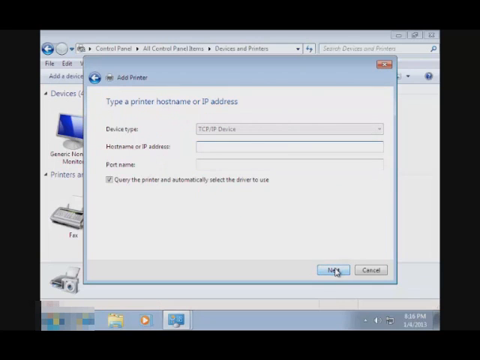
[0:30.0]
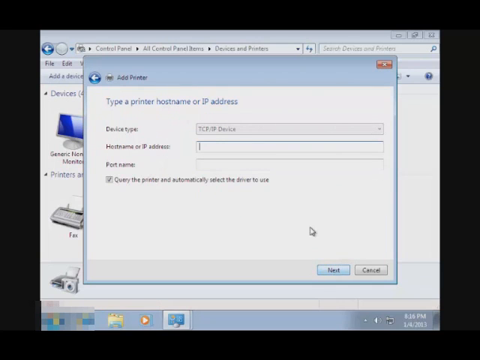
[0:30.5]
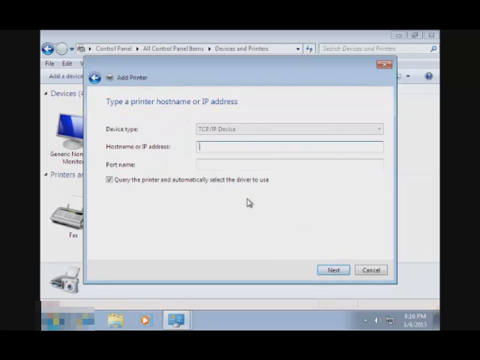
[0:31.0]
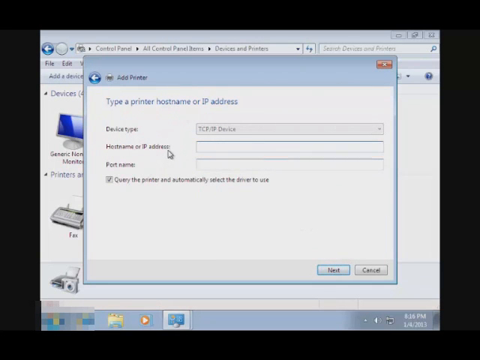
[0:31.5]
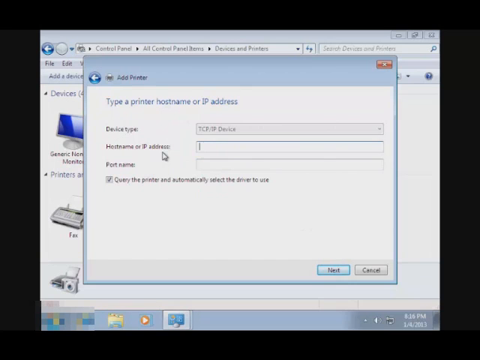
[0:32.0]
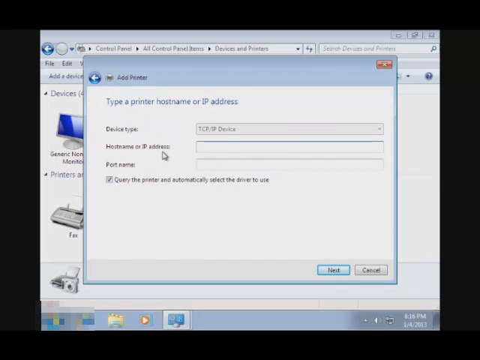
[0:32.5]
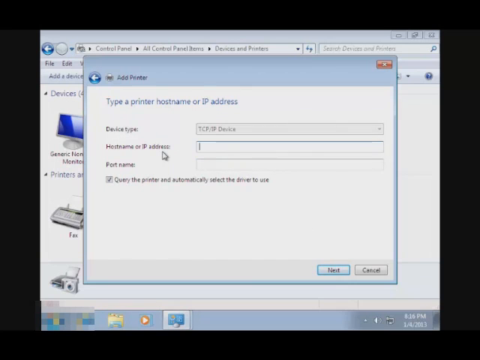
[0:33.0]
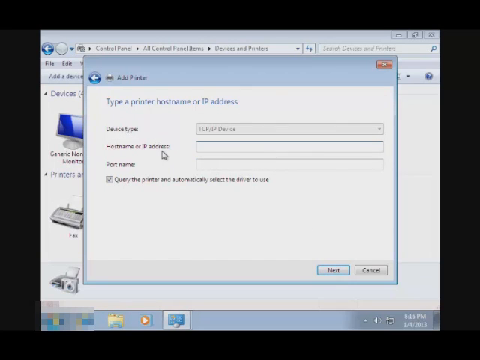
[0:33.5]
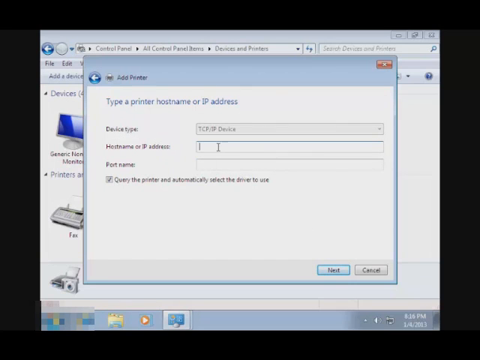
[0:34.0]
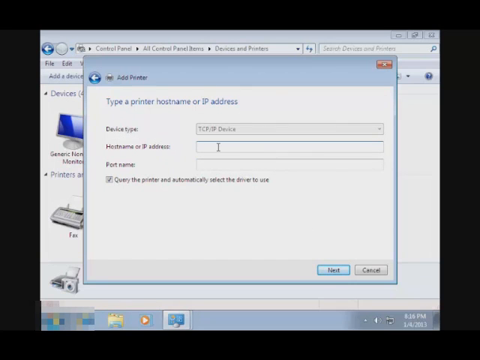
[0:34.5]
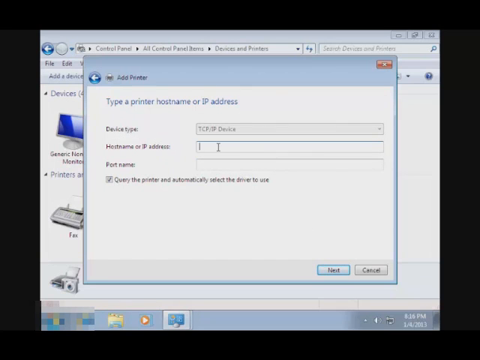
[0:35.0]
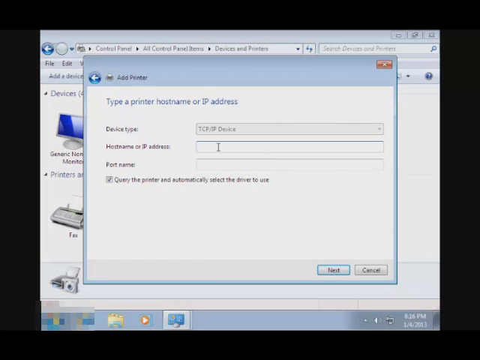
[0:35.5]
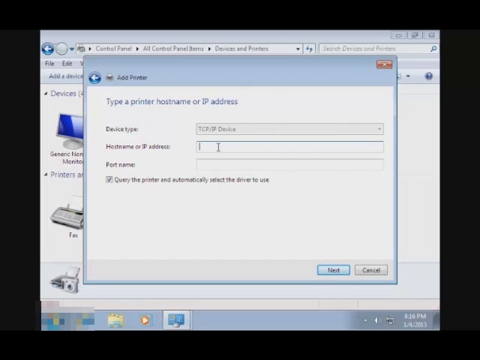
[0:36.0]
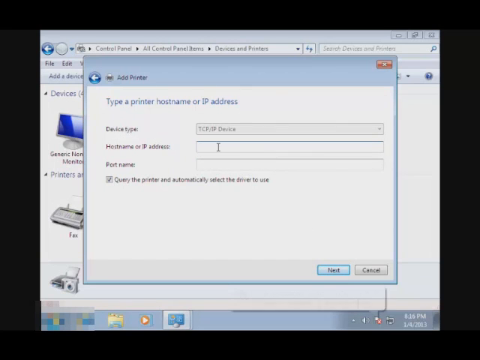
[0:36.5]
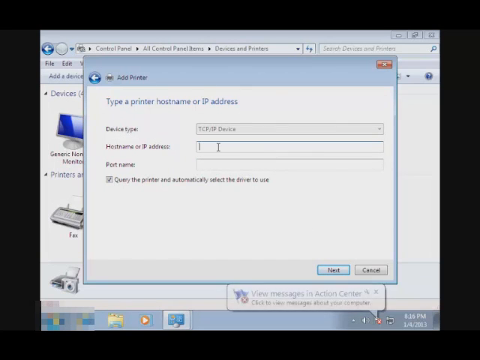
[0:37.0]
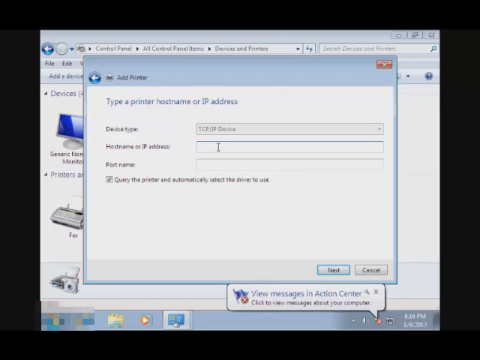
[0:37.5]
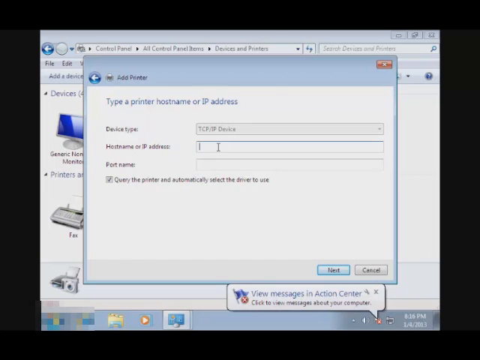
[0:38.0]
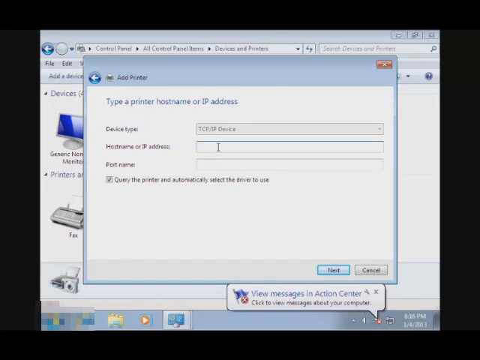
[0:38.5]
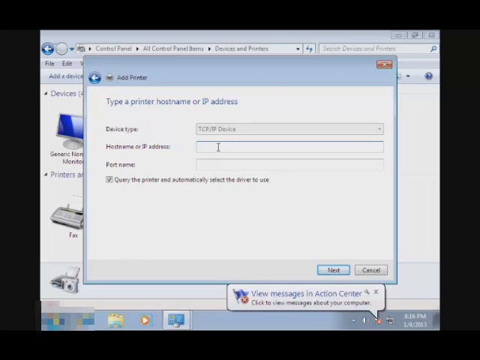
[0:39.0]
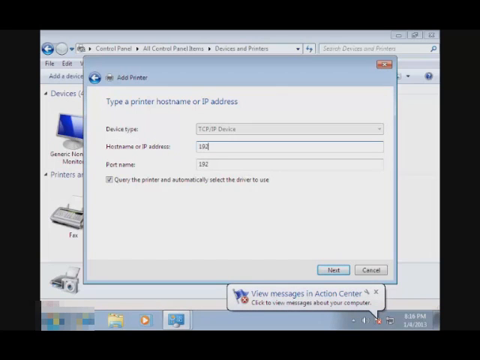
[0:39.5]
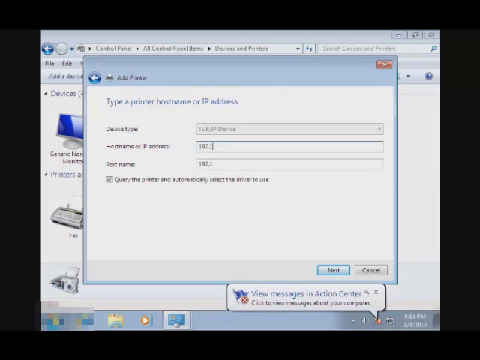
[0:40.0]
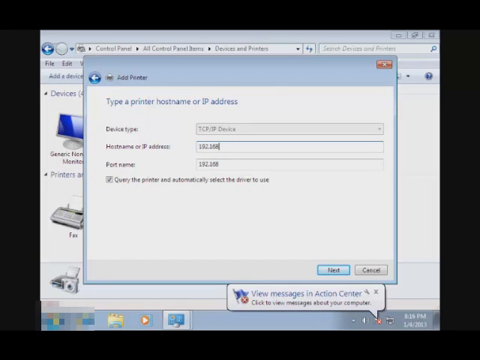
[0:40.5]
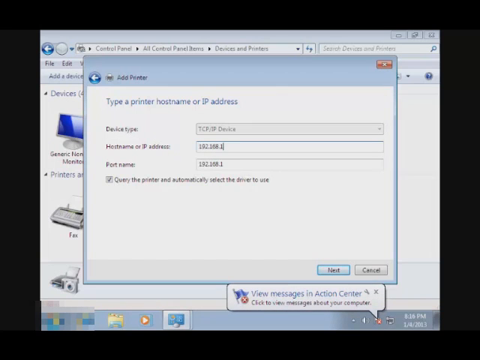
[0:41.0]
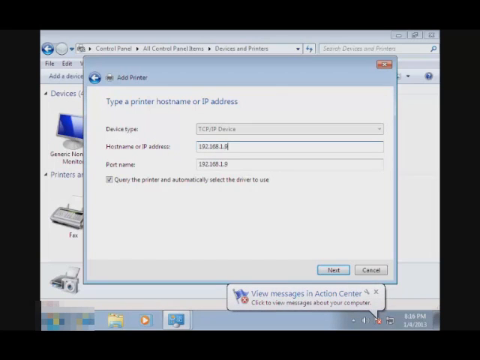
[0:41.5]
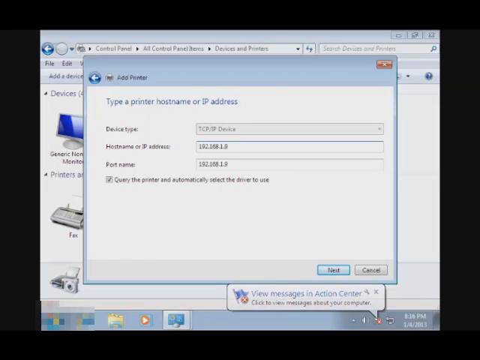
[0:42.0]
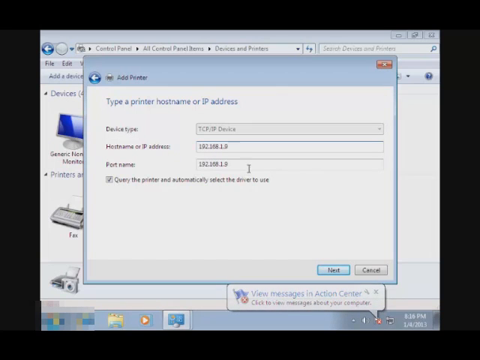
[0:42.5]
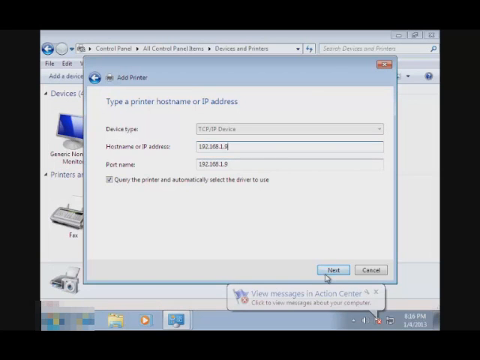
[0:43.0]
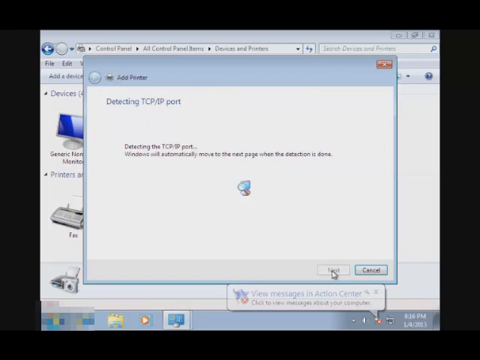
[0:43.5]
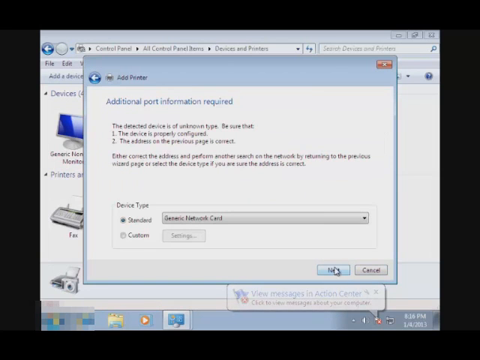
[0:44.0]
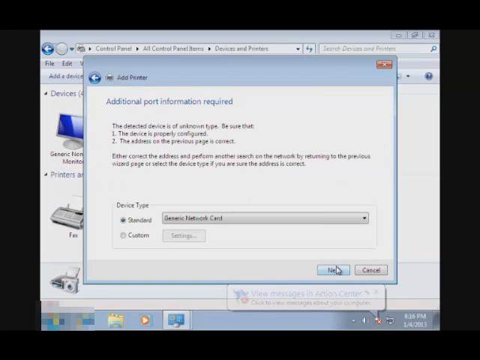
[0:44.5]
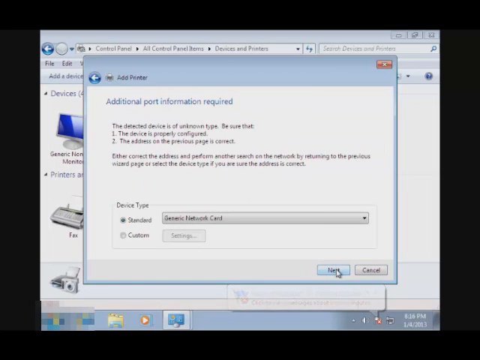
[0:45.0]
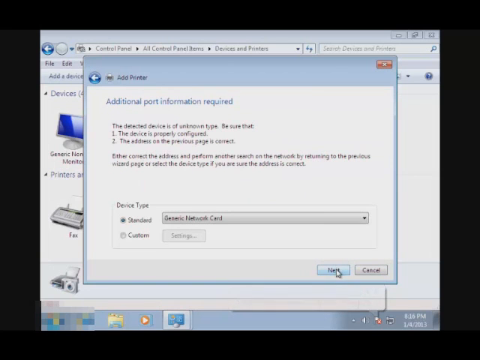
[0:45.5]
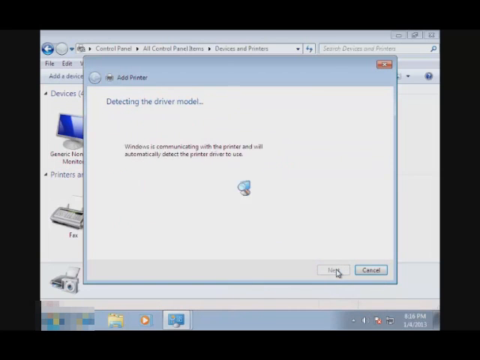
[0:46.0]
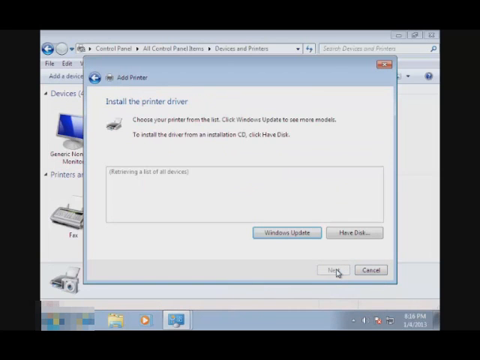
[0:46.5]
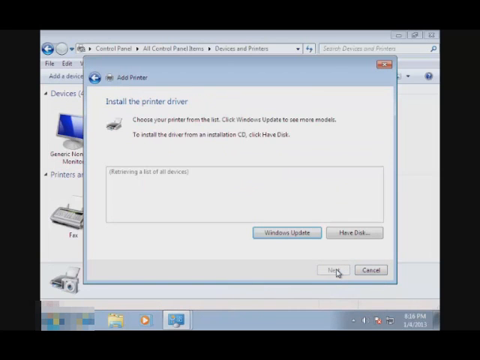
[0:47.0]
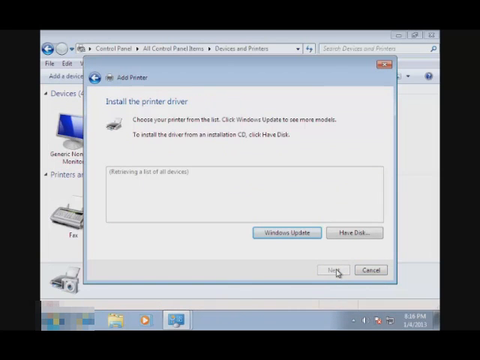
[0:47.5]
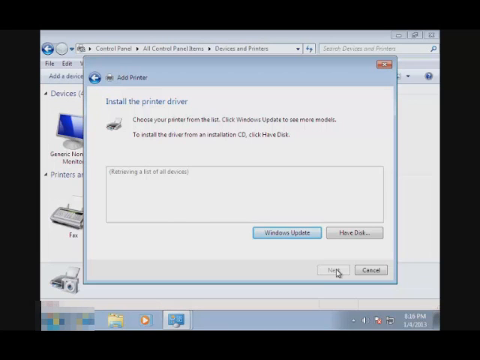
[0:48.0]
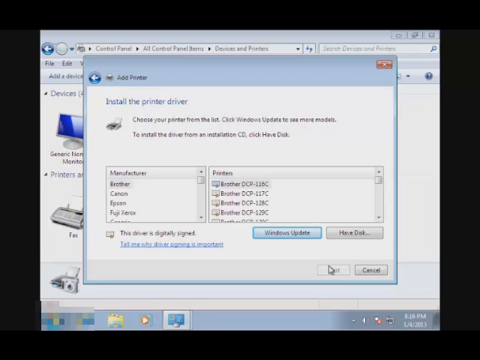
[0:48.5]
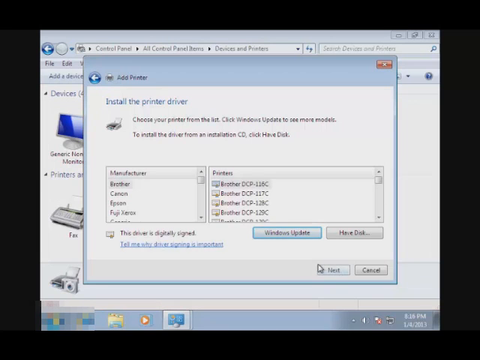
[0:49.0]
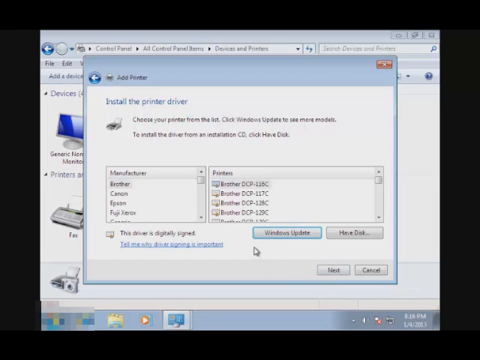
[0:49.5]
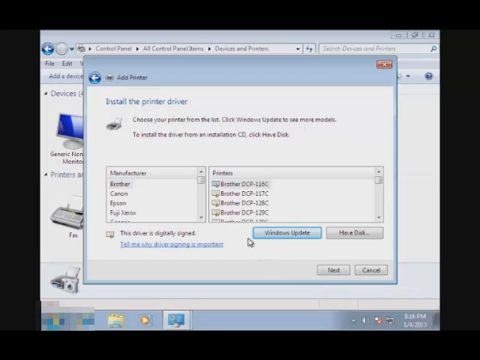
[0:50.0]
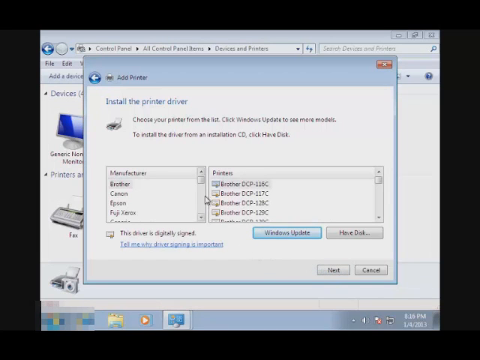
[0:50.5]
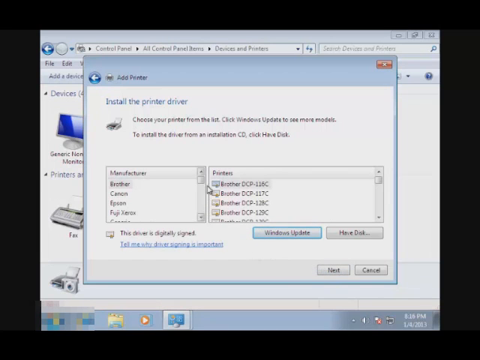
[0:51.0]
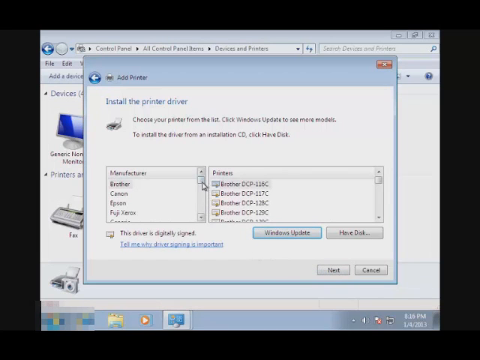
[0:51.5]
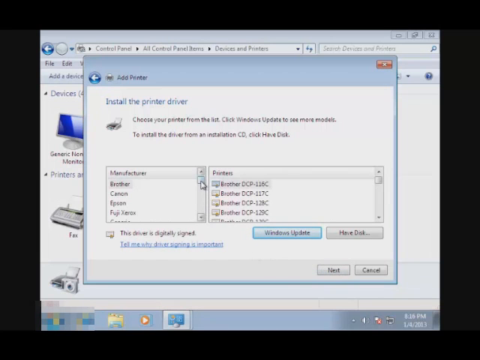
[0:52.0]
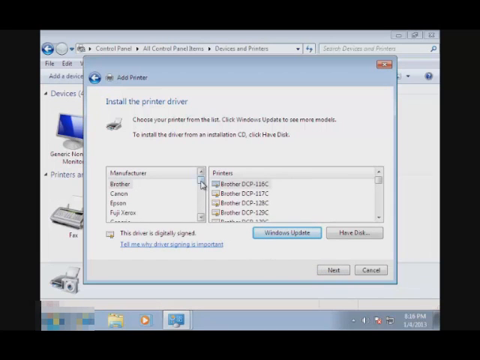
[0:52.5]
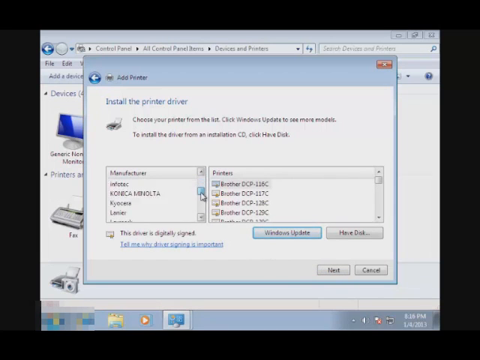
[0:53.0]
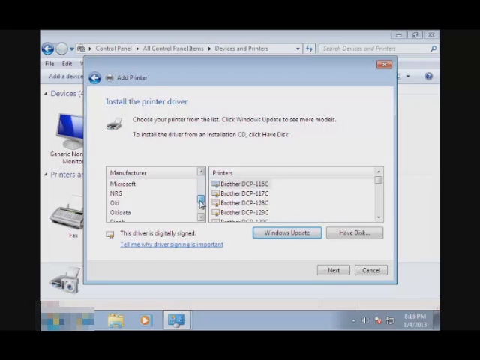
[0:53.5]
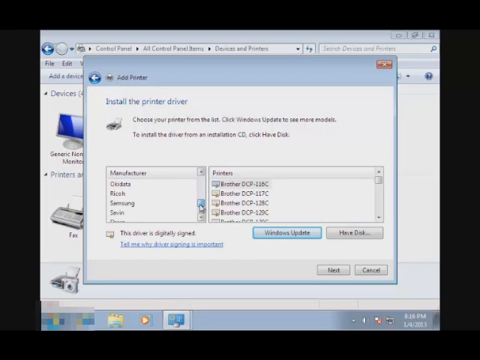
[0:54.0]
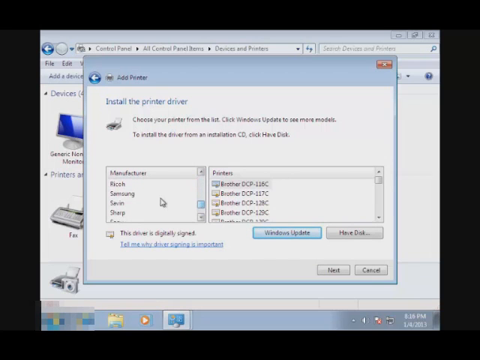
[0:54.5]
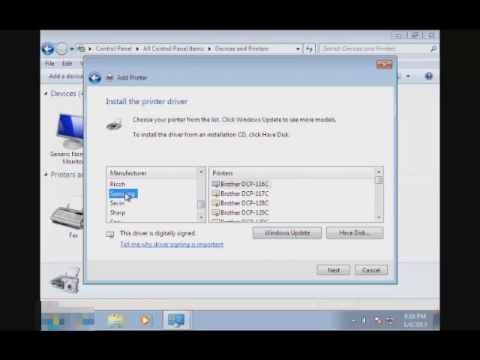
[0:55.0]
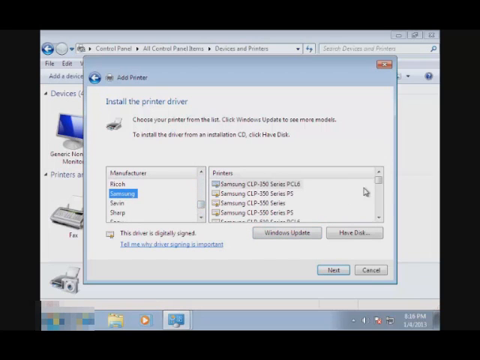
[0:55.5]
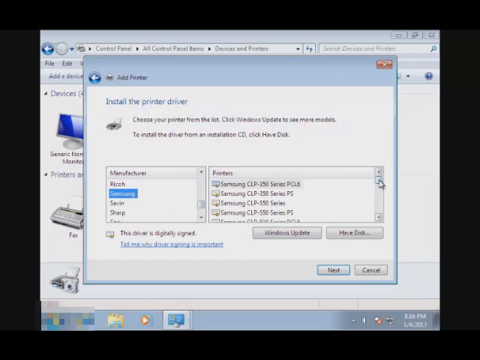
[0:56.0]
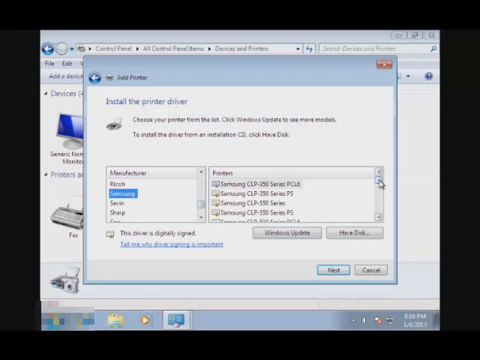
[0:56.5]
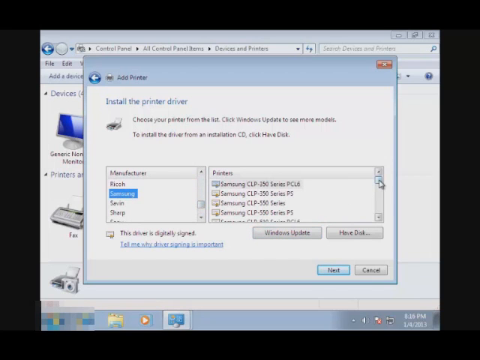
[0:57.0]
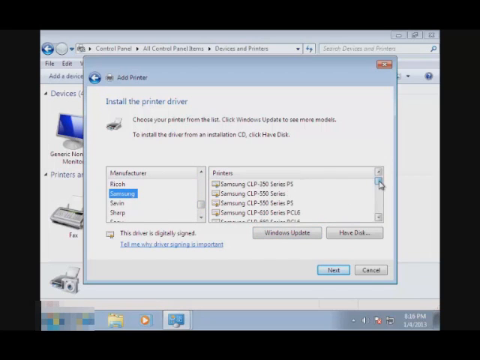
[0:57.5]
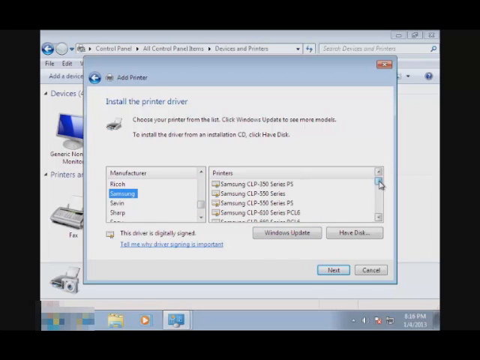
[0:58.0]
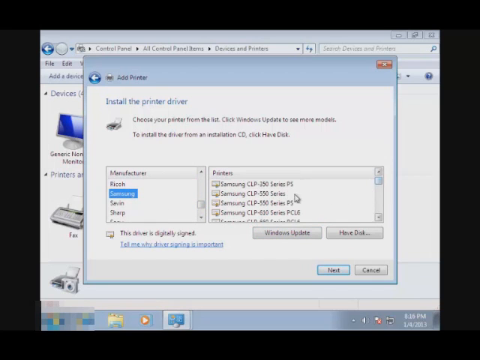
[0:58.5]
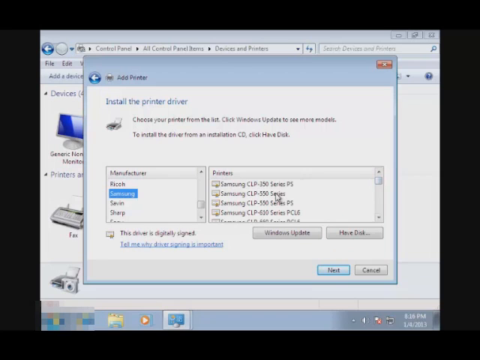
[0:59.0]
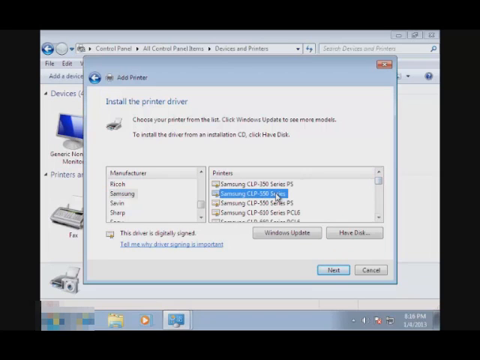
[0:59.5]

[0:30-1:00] The person installs a printer, entering the host IP address and going through the driver installation steps in Windows Explorer to install it directly without a disk. They find Samsung on one side and locate a driver by model number and printer type, apparently looking for one close enough to fit their printer. It appears to be an instructional walkthrough on installing a driver for an older, non-Bluetooth printer.